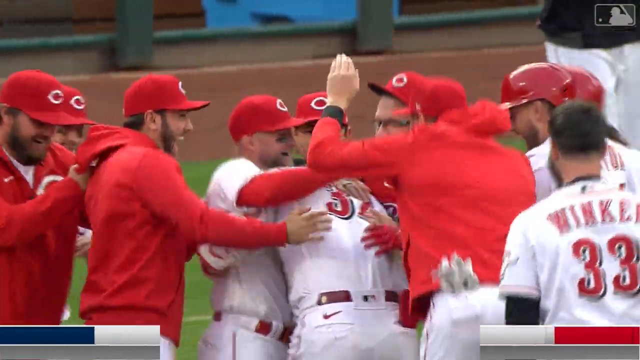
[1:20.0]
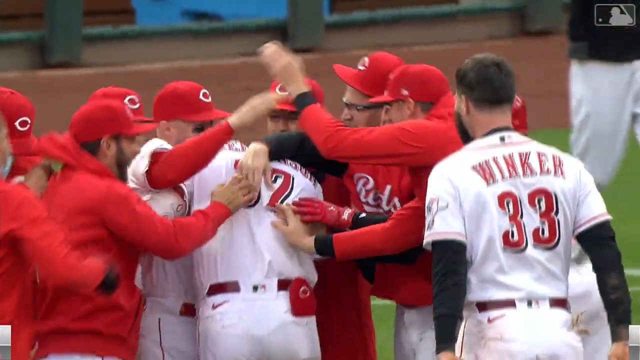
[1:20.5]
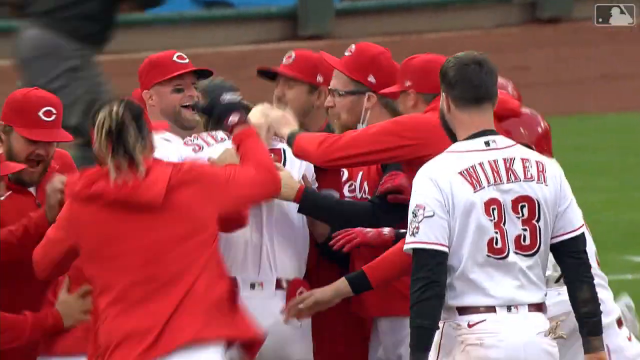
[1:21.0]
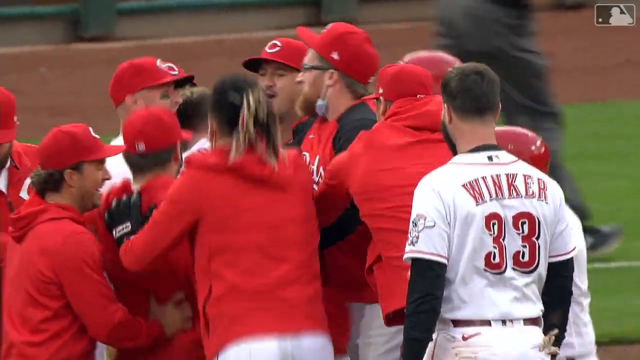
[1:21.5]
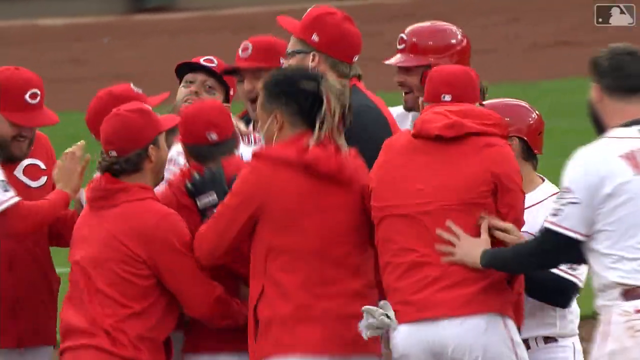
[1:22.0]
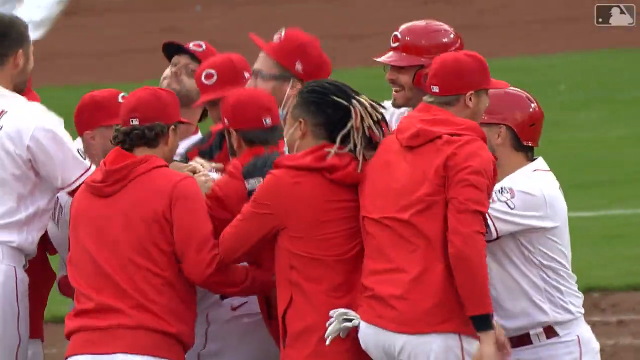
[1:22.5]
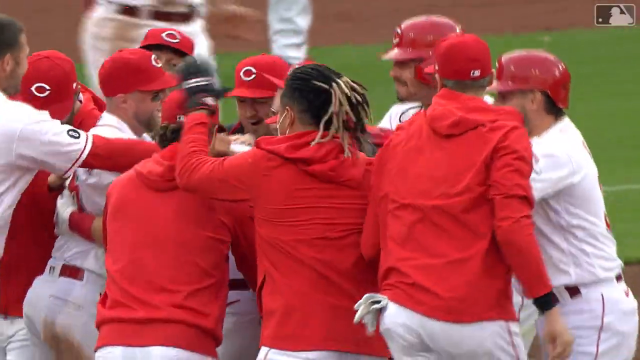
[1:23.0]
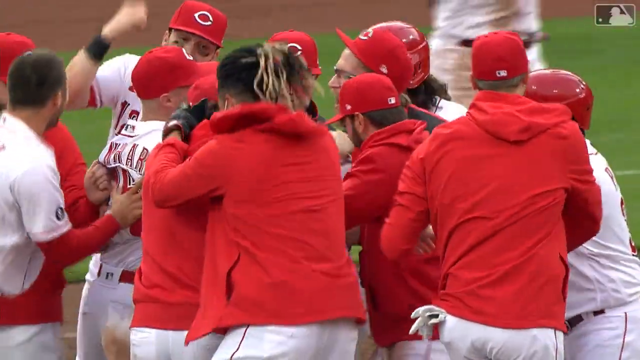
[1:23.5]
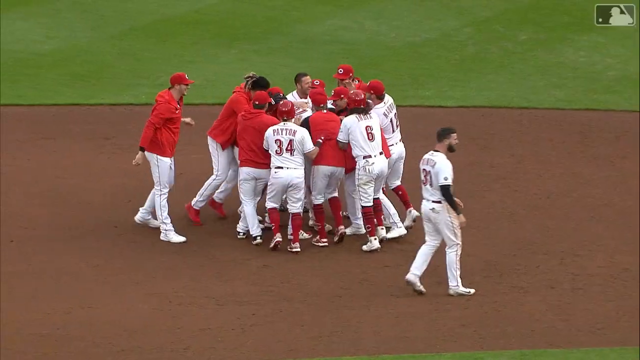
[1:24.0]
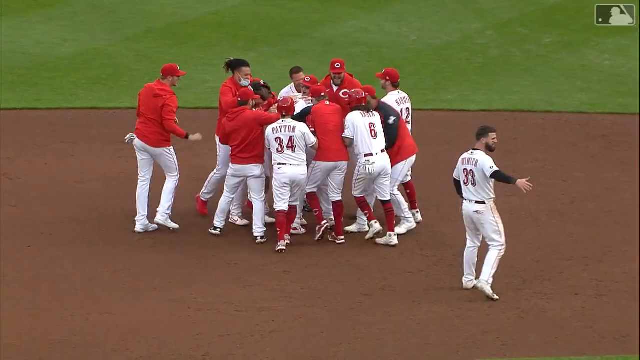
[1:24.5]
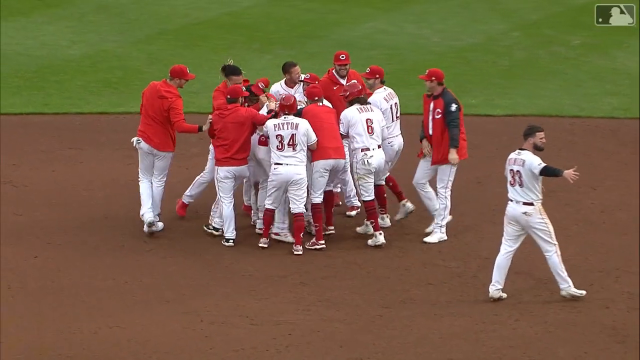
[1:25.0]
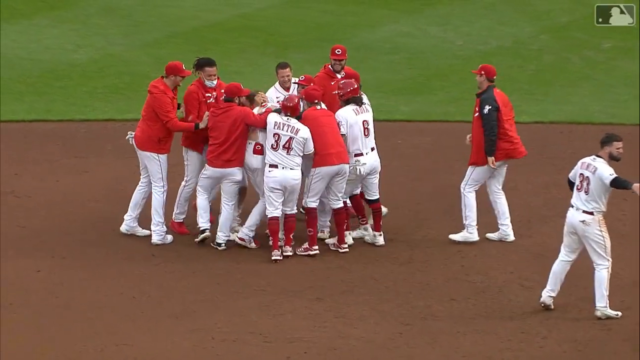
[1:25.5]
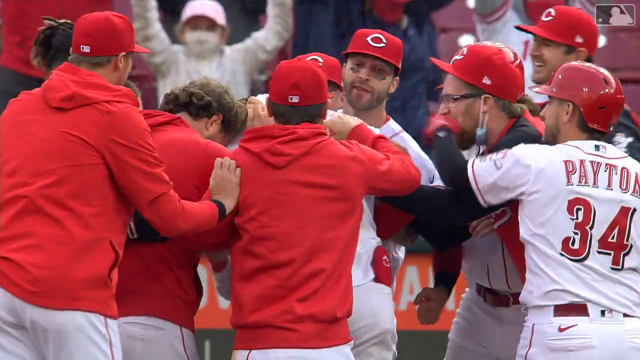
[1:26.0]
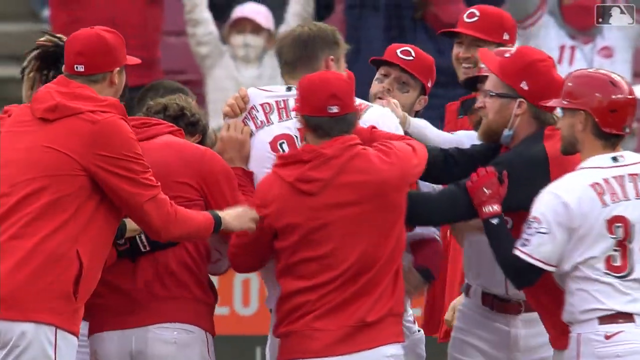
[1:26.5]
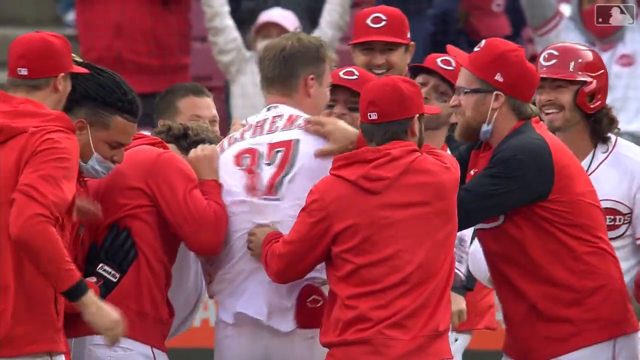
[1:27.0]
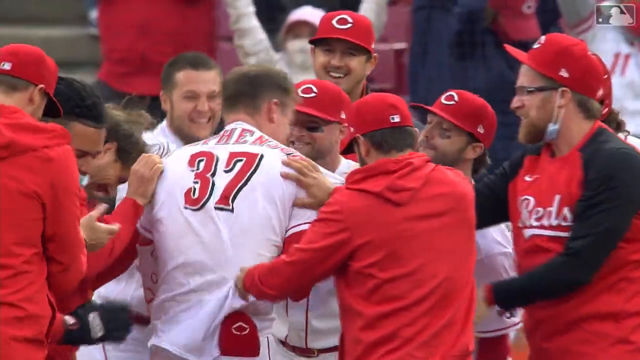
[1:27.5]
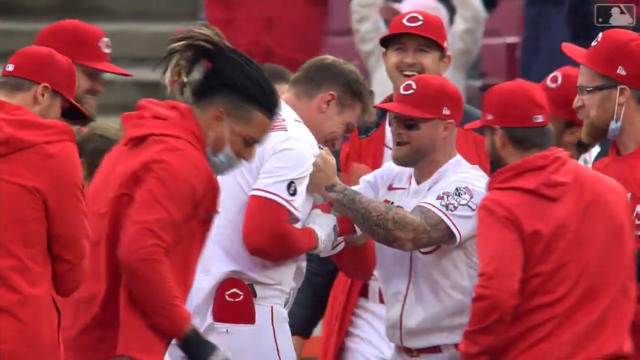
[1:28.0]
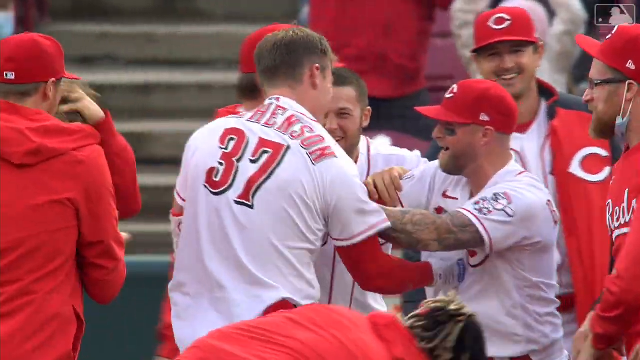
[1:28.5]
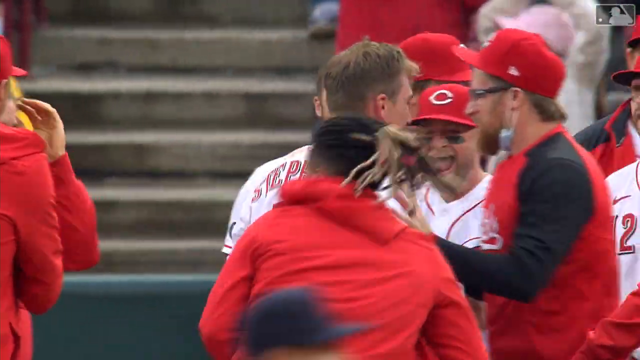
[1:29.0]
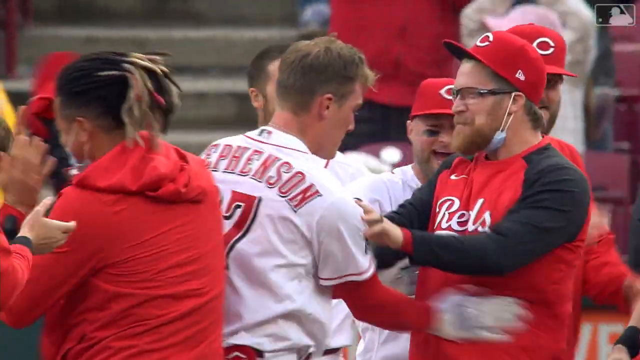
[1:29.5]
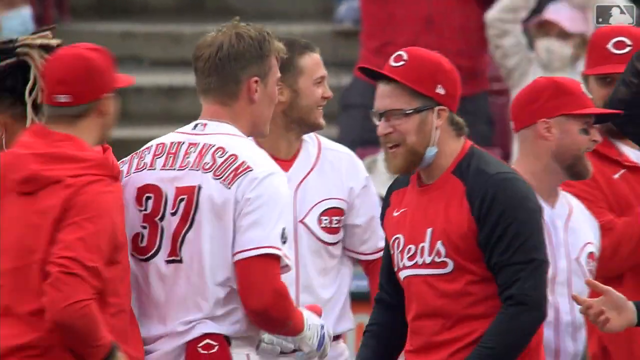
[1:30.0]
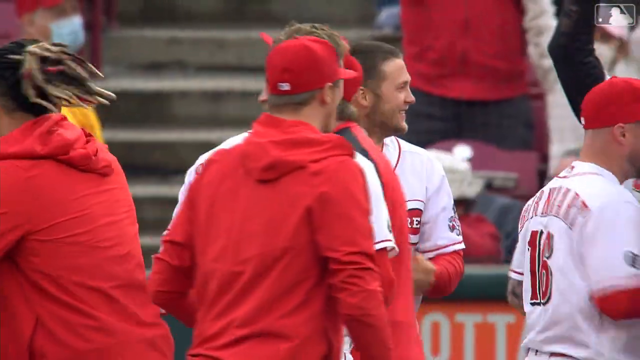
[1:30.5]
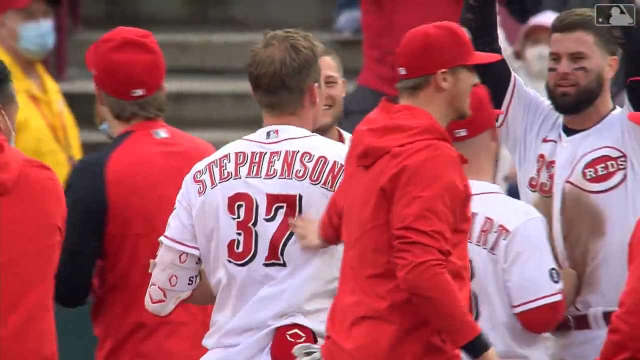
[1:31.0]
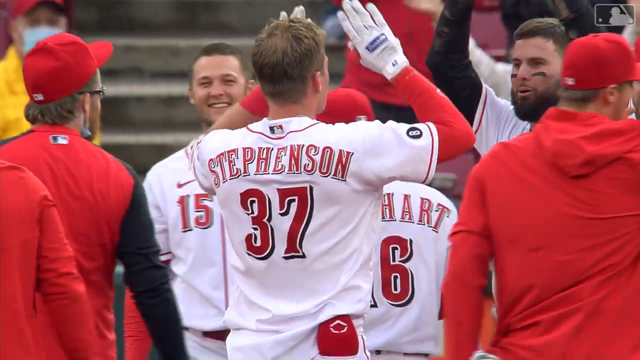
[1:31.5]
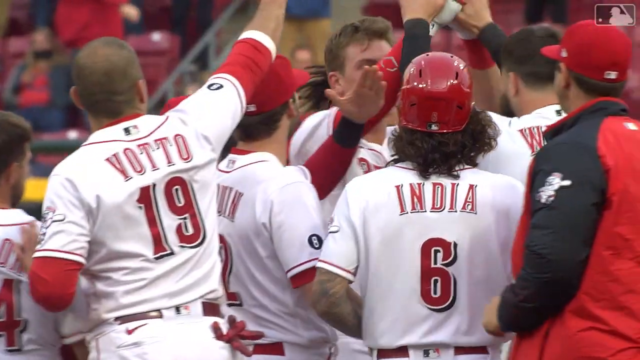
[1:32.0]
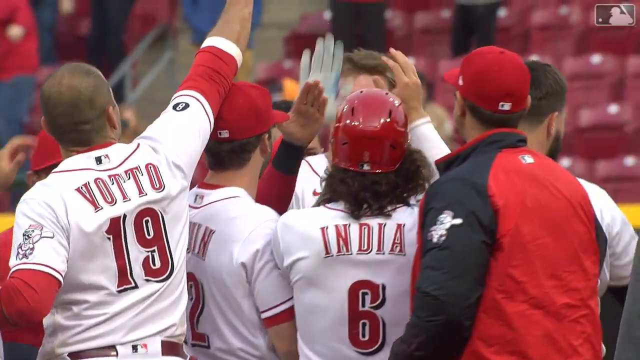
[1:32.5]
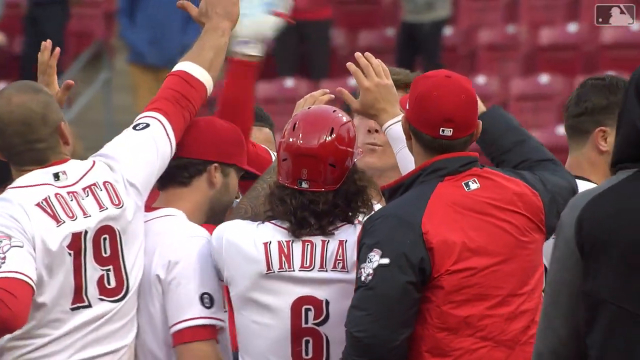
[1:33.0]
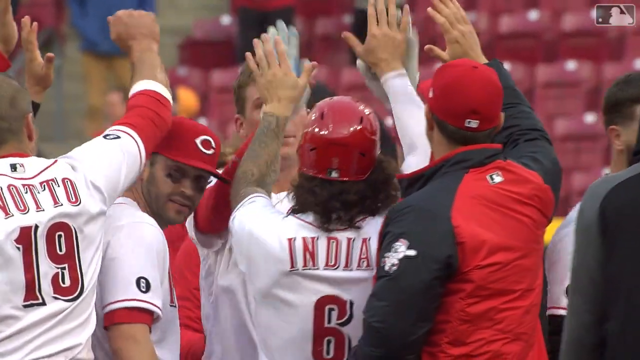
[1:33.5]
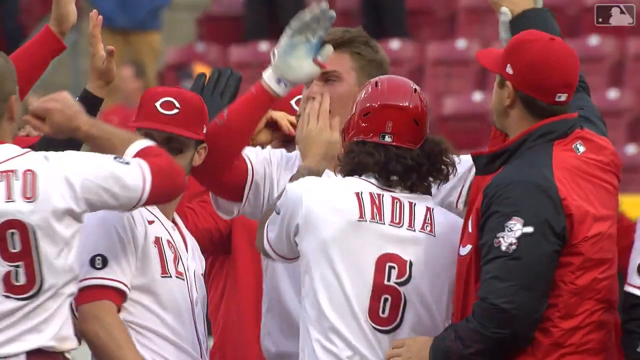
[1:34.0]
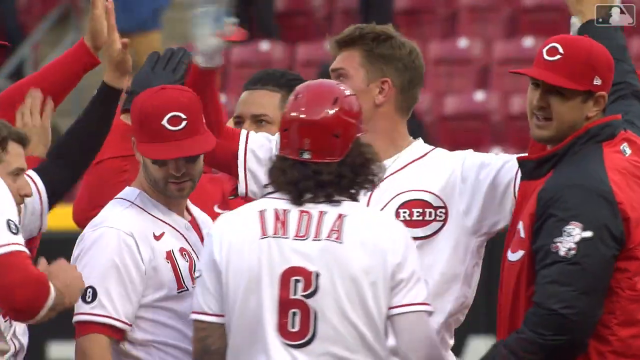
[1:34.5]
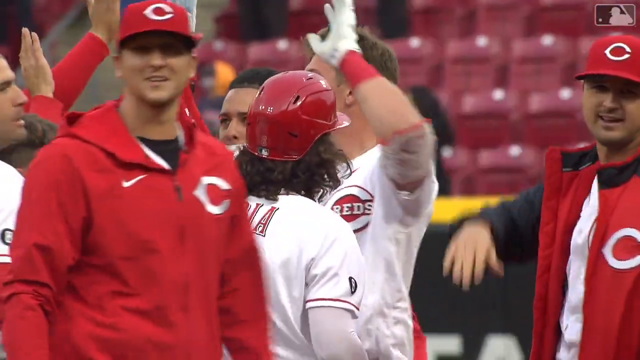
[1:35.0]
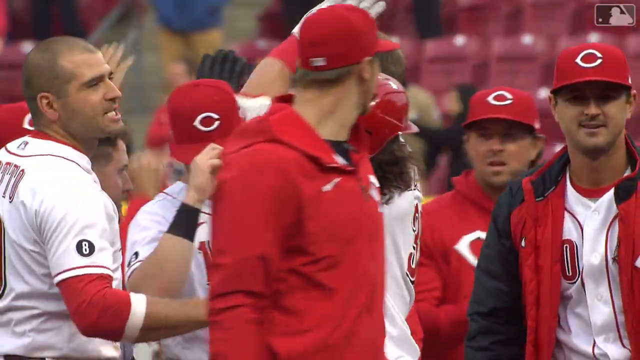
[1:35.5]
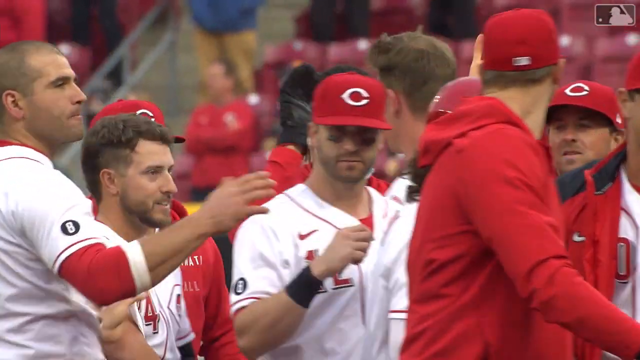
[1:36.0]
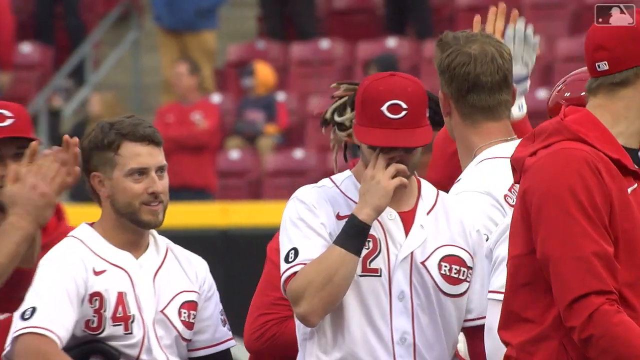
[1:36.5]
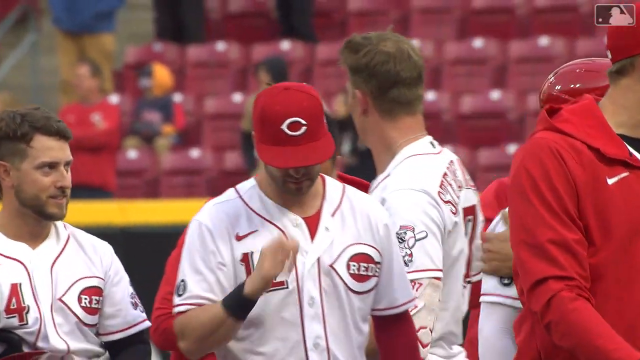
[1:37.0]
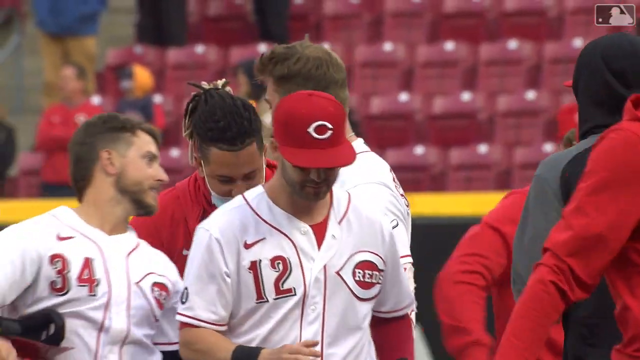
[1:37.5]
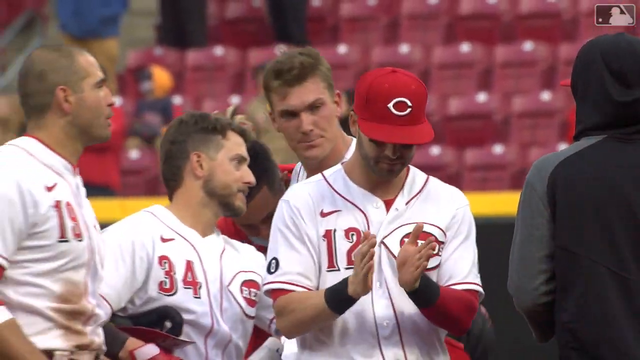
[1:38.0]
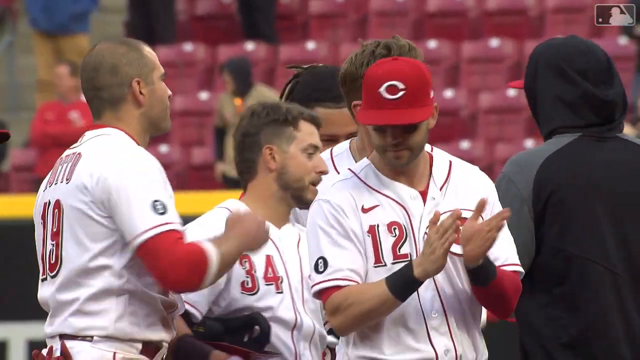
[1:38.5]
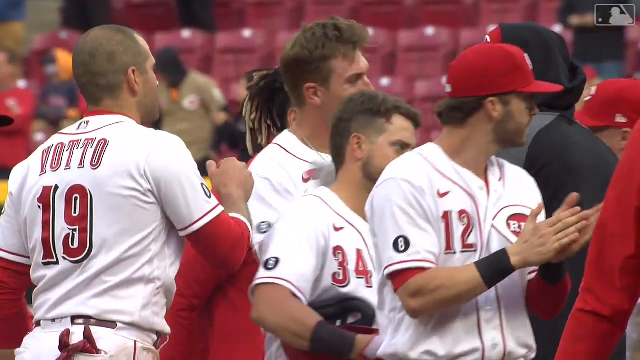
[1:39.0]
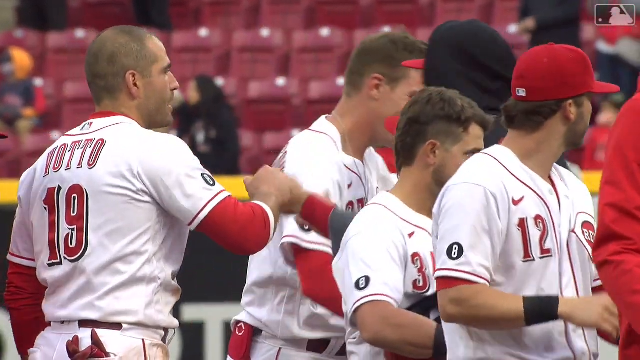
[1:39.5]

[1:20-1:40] The team in red cheers, jumping up and down and hugging each other; it looks to be a mix of coaches and players celebrating a win. They focus their attention on player 37, giving him lots of pats on the back, suggesting this player most likely made a very big score. The front of one player's jersey says "REDS." Most of the players have black streaks under their eyes. They keep congratulating each other, especially that one player, before dispersing from the huddle. Most of the coaches wear red hats and the players wear red helmets. The players' uniforms are white with red lettering, and they wear red and white sneakers and long red socks.